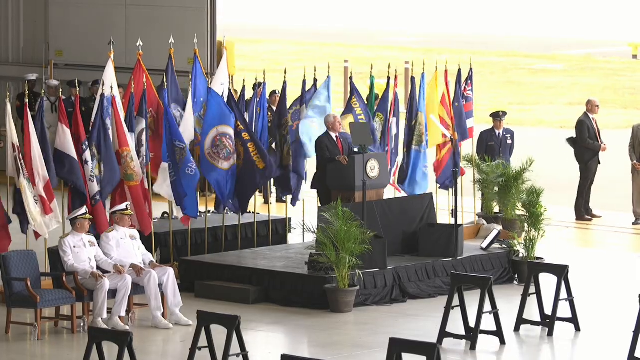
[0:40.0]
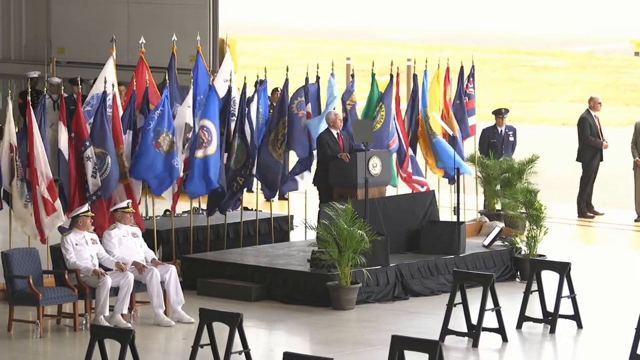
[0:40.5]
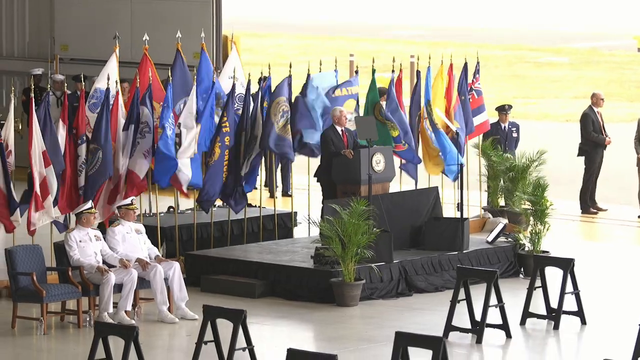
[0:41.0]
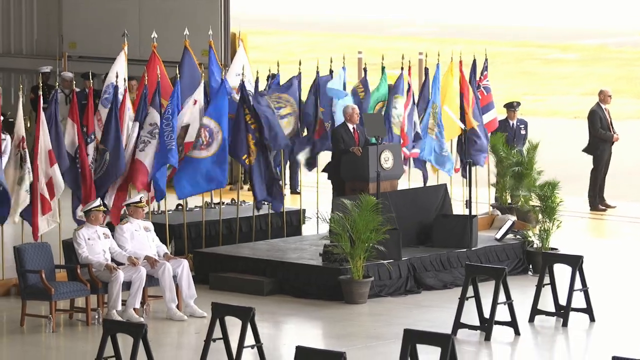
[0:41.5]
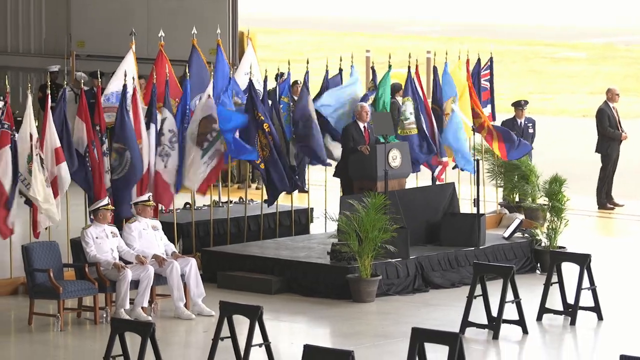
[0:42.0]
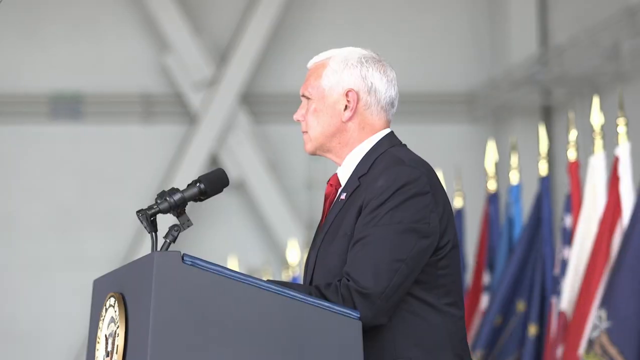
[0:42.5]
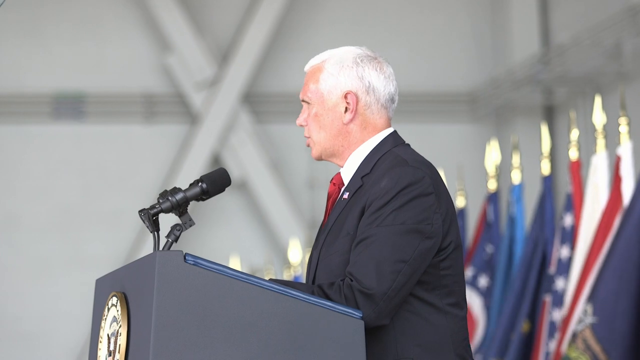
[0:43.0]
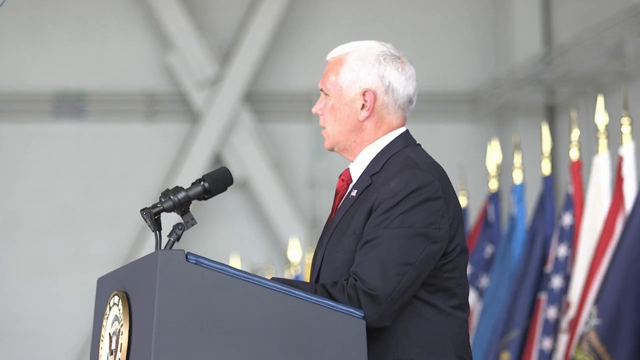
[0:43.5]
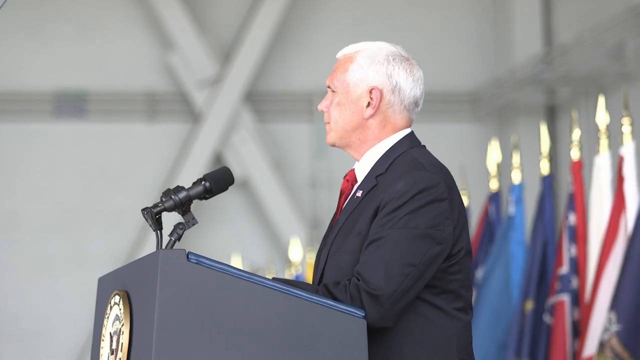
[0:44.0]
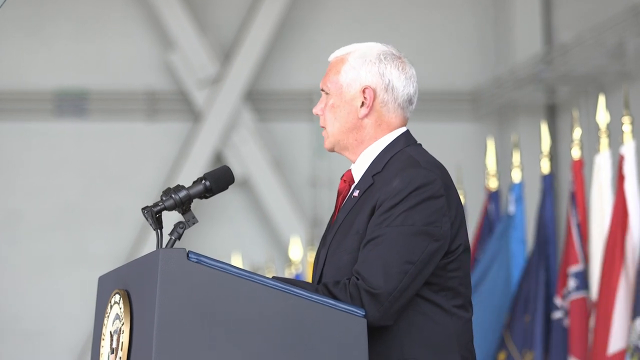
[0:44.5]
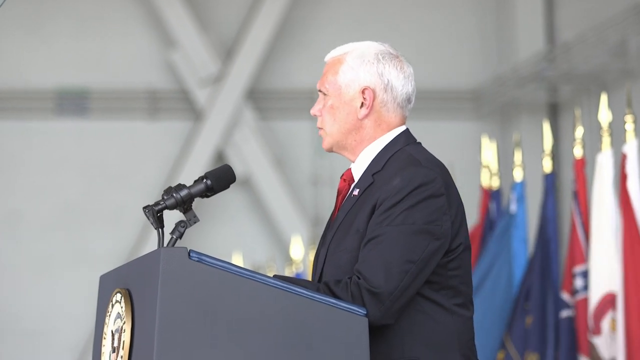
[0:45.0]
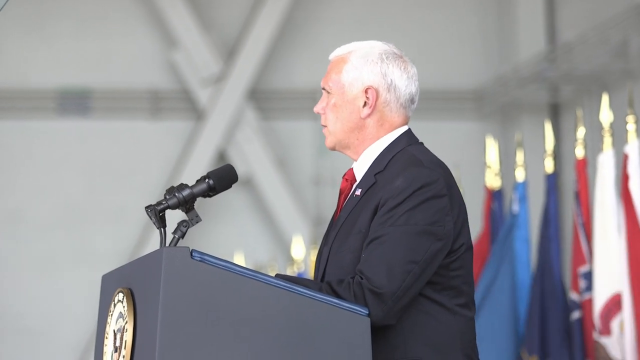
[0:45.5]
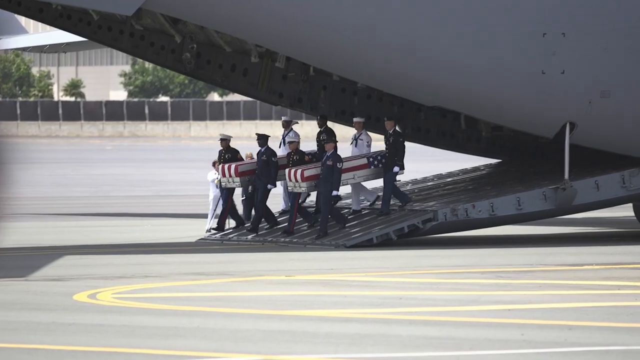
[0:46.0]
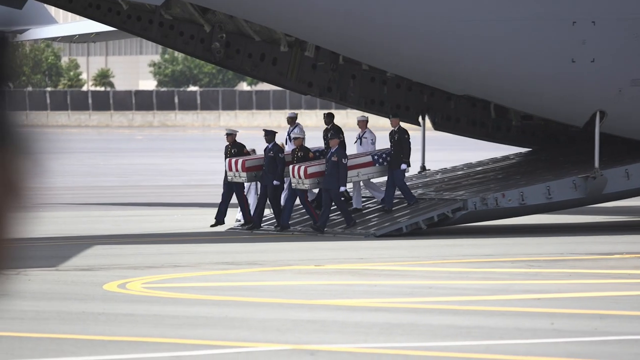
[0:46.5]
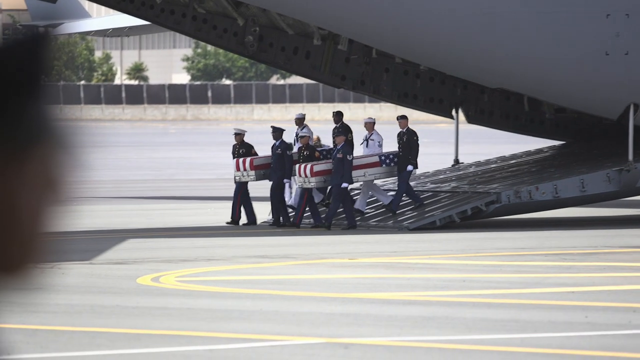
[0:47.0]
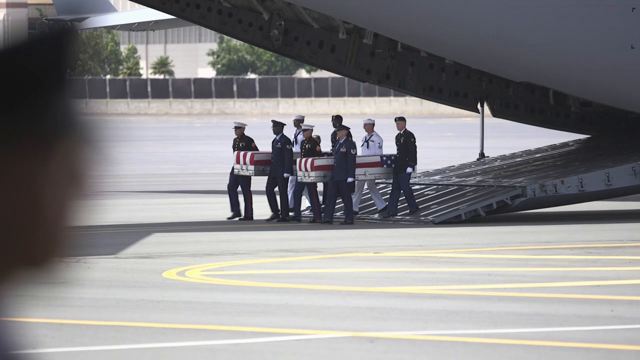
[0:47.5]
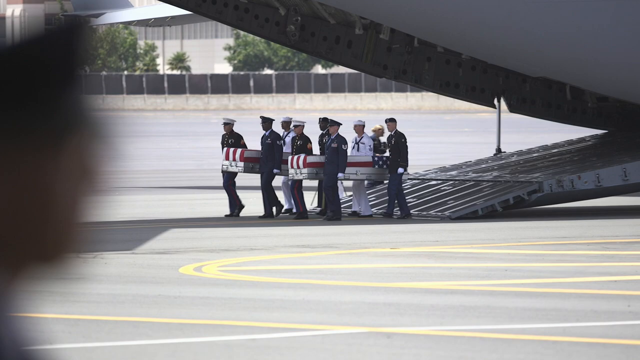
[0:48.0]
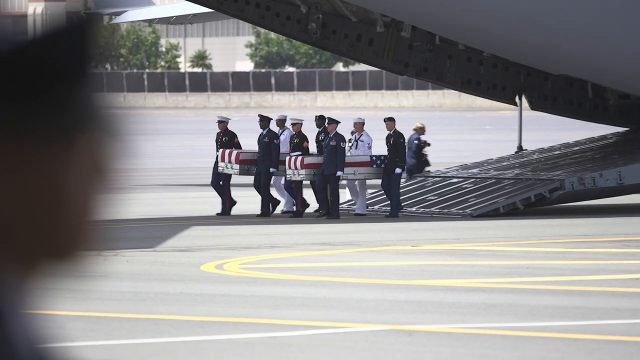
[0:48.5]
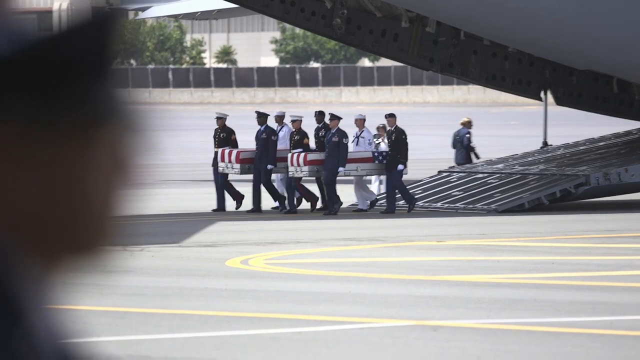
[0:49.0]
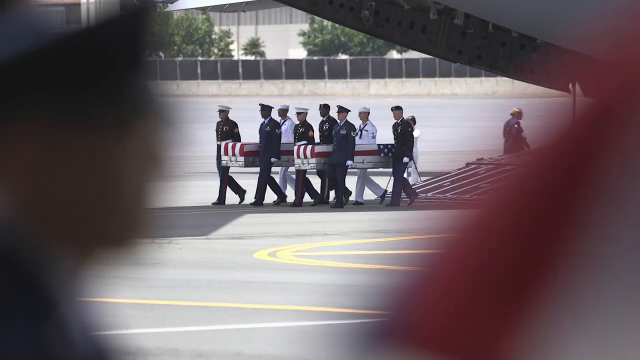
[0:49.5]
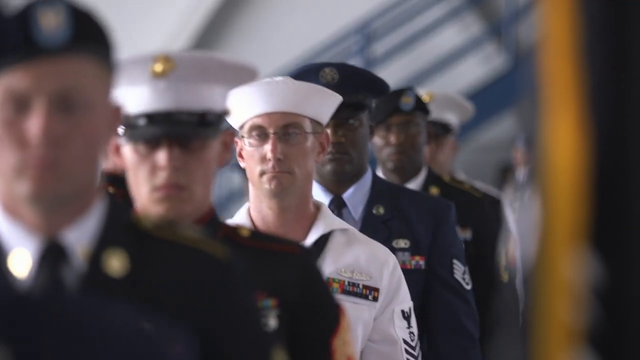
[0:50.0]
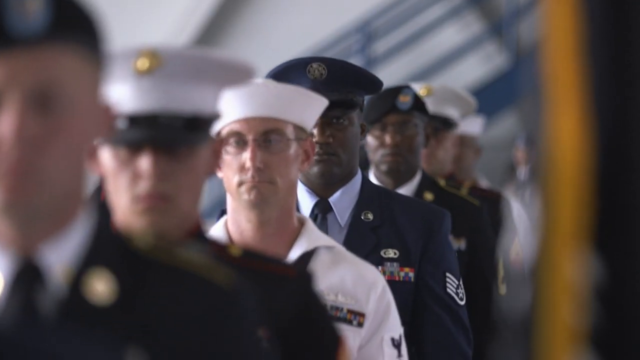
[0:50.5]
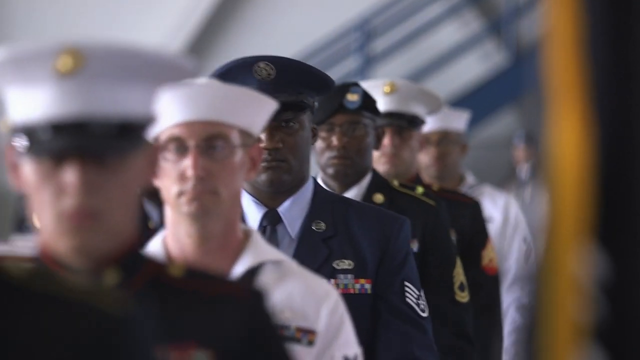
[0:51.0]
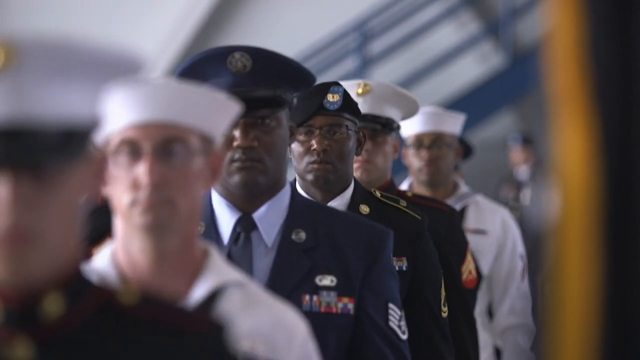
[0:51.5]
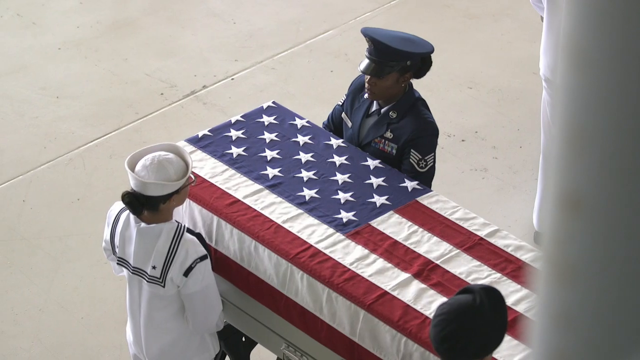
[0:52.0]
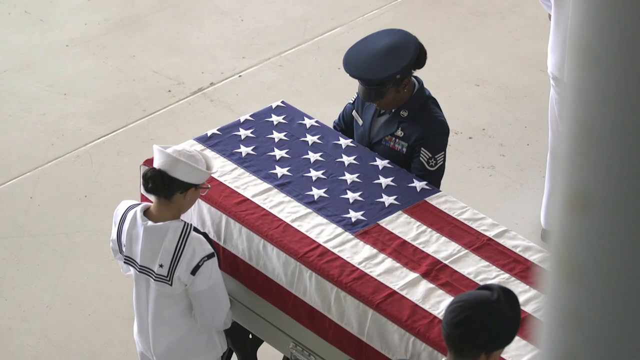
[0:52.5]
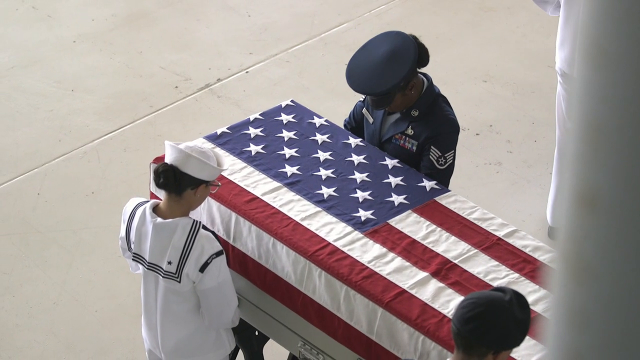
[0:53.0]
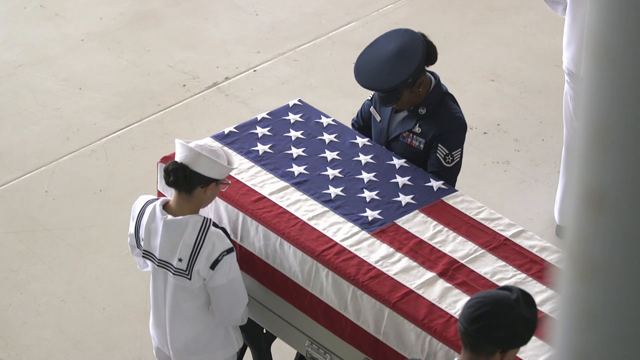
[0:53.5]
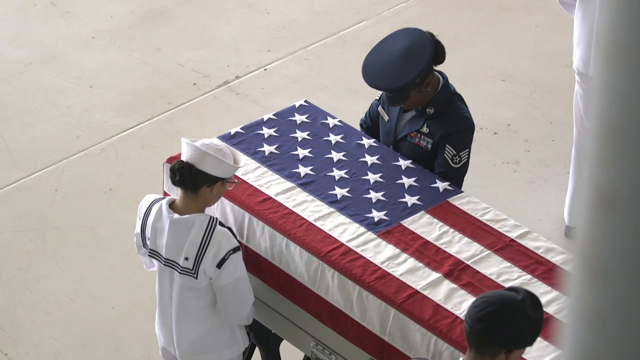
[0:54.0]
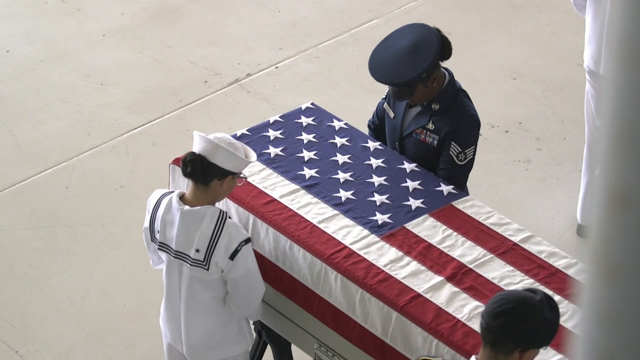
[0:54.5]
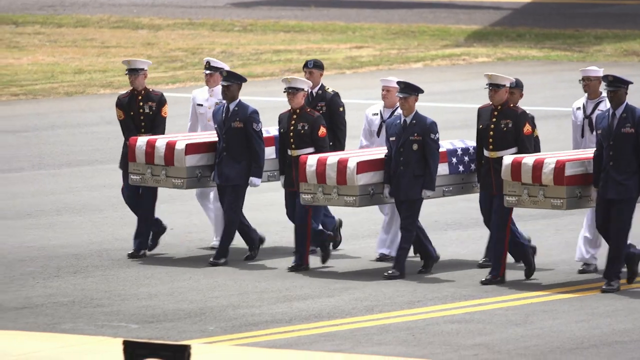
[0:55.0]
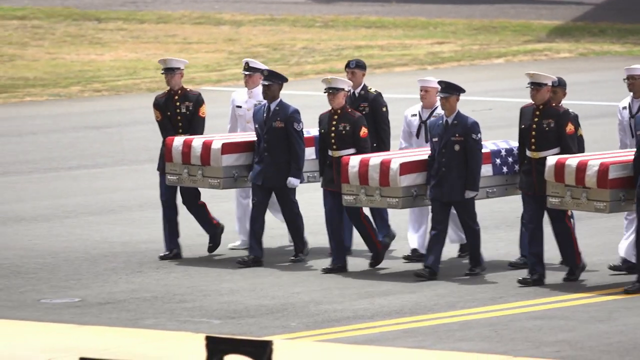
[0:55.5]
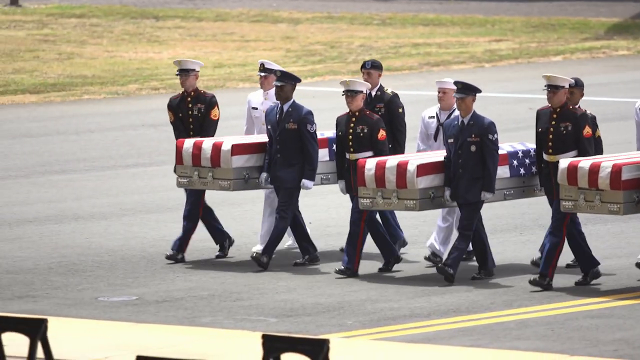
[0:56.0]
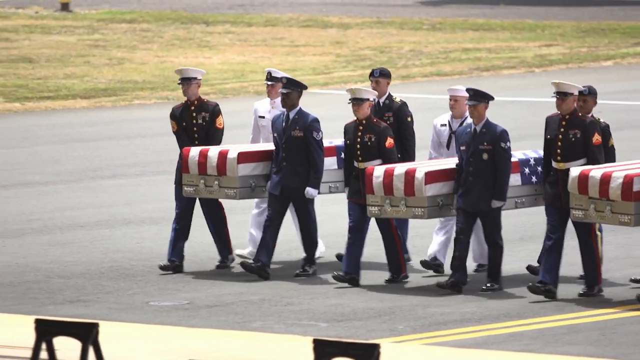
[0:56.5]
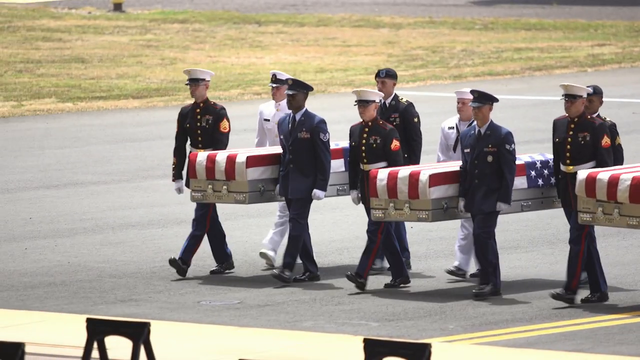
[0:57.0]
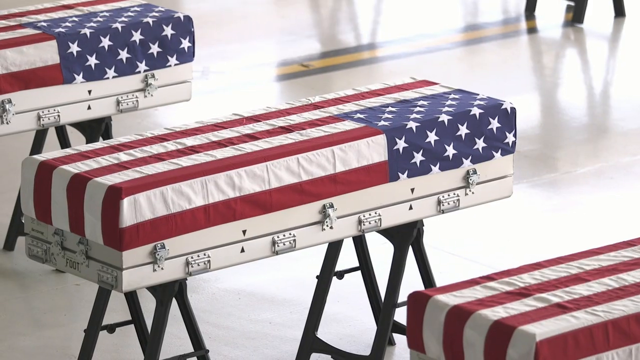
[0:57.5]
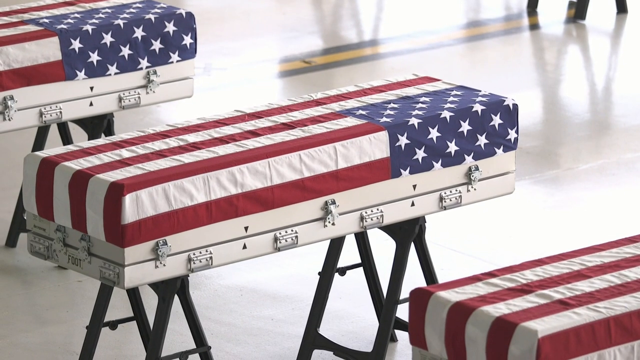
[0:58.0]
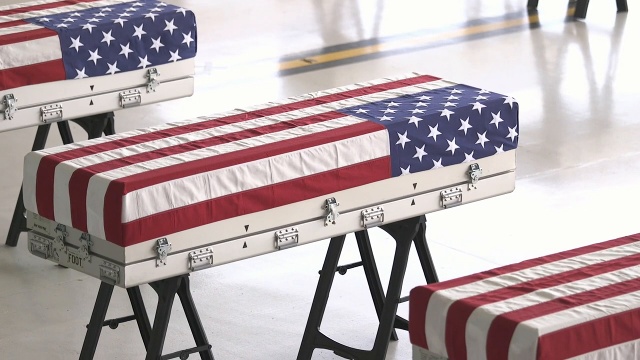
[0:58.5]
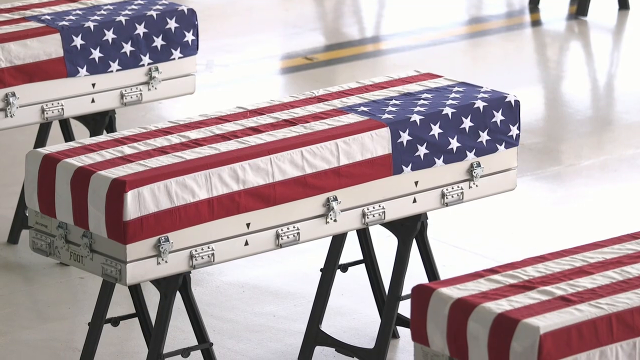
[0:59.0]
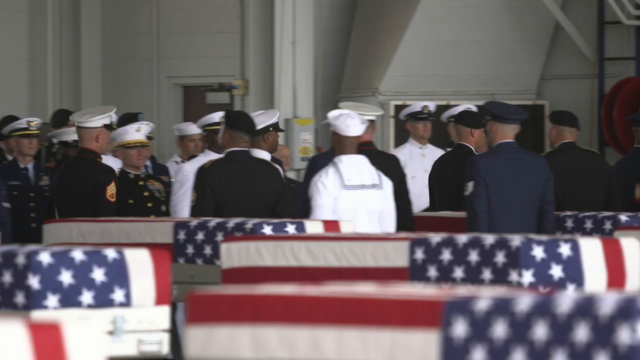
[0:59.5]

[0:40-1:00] People wear white navy uniforms, and many coffins are visible. Coffins are taken out of the airplanes. A group of six people in dark uniforms and caps stands around a coffin wrapped in a red and white flag on what appears to be an airfield or a similar outdoor setting. Two women stand giving tribute, one in a white uniform and the other in a blue uniform. A man in a dark suit stands at a podium addressing an audience; he appears to be speaking at a ceremony or conference, with various international flags displayed behind him. People in military uniform are seated to the left of the podium and standing on the right. Many coffins have been taken out and placed at the front. Men sit on chairs wearing white shoes and caps. A group of eight people holds two coffins, taking them out of the airplane.